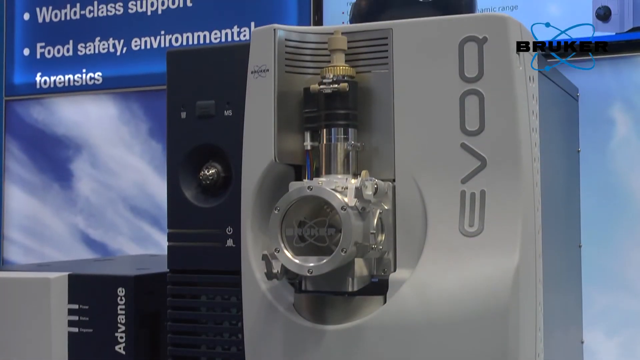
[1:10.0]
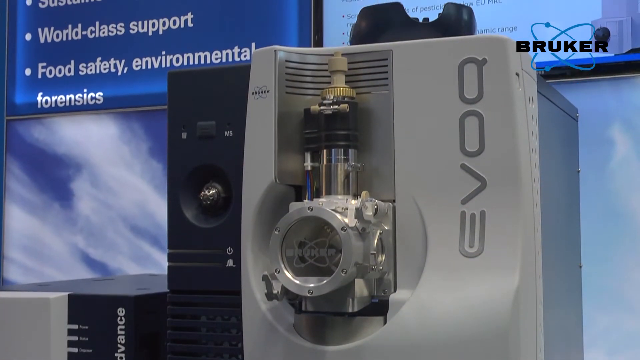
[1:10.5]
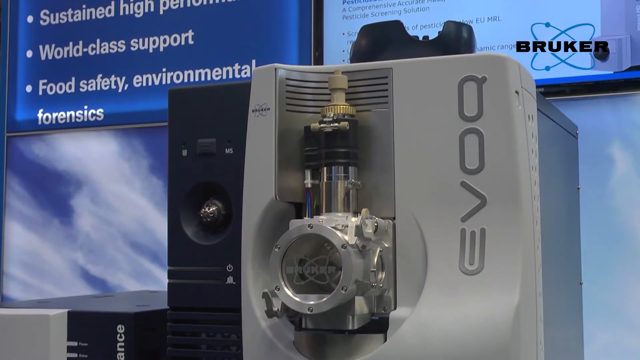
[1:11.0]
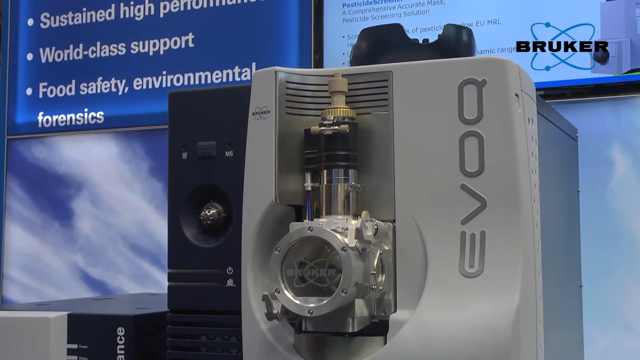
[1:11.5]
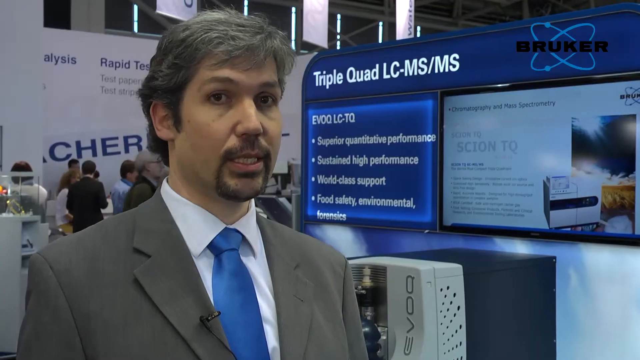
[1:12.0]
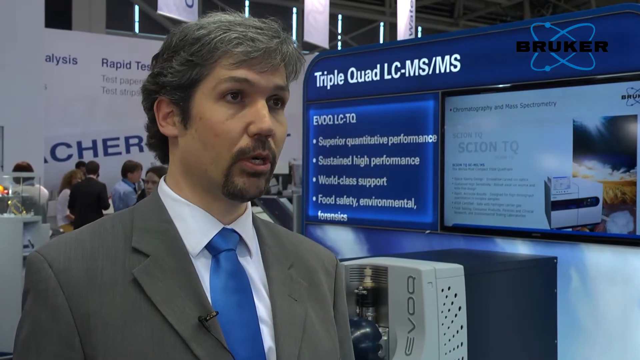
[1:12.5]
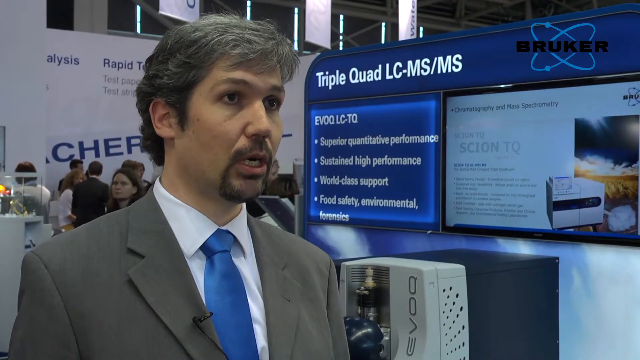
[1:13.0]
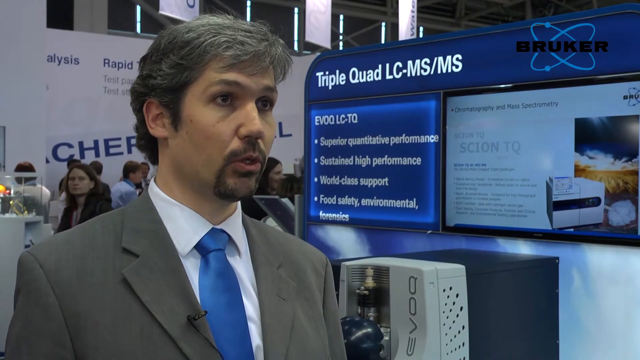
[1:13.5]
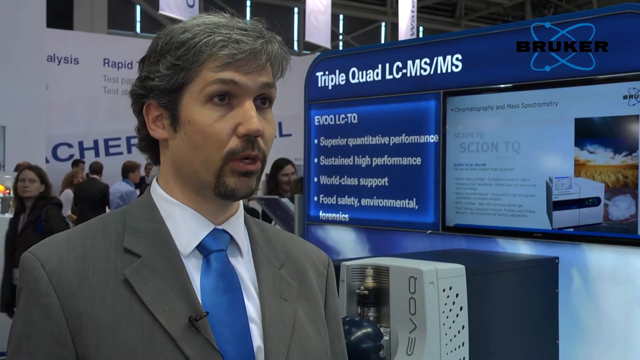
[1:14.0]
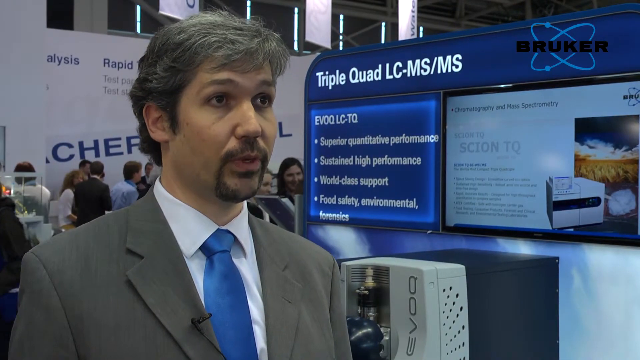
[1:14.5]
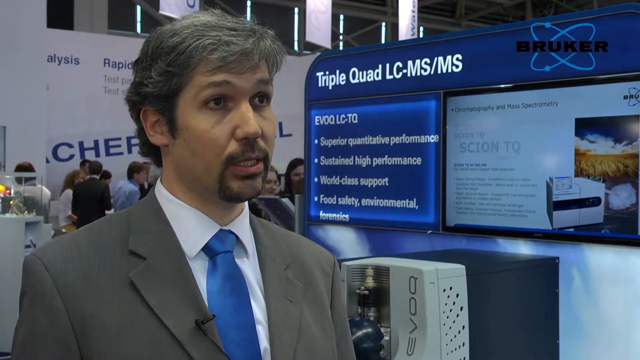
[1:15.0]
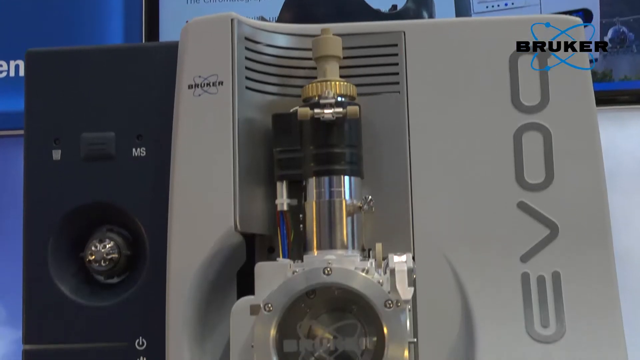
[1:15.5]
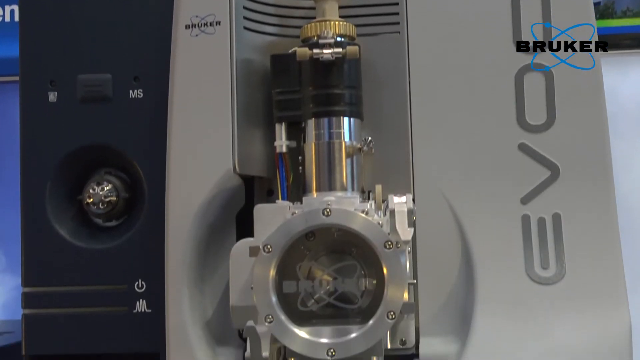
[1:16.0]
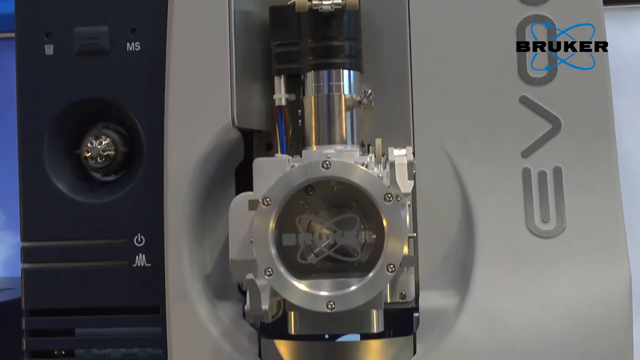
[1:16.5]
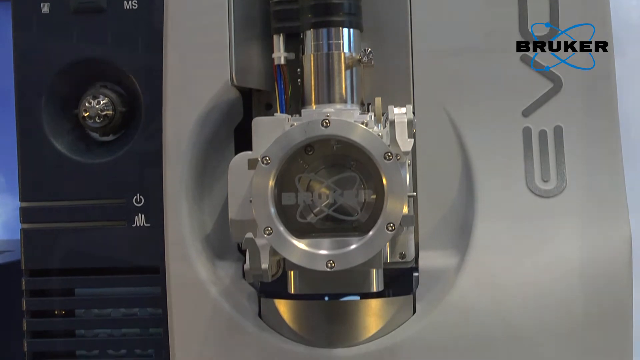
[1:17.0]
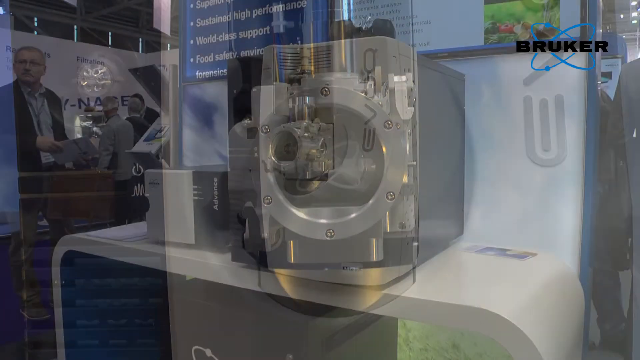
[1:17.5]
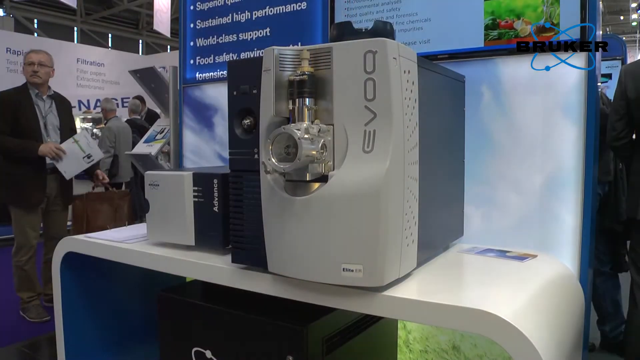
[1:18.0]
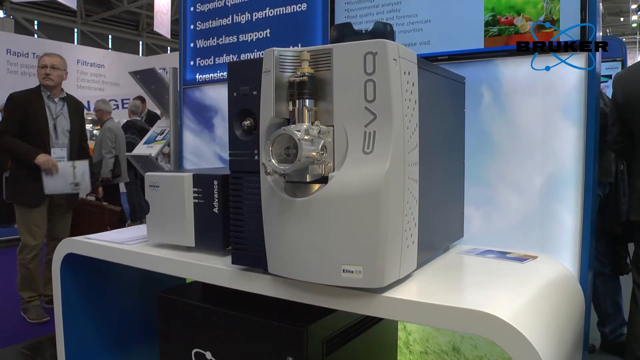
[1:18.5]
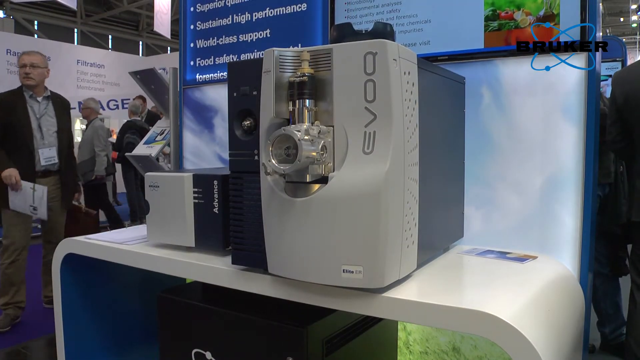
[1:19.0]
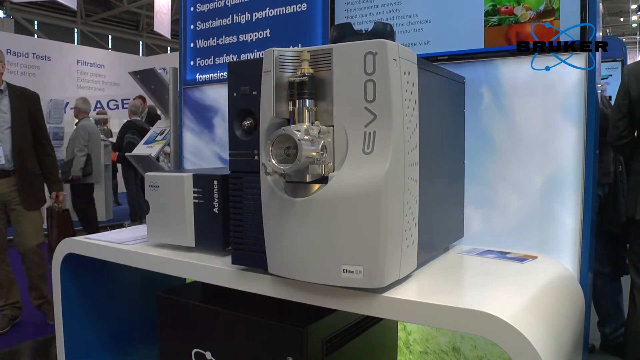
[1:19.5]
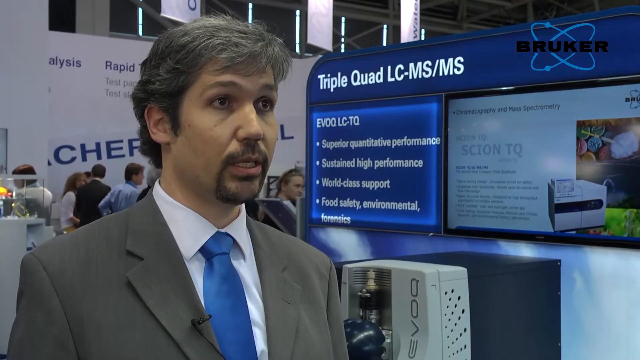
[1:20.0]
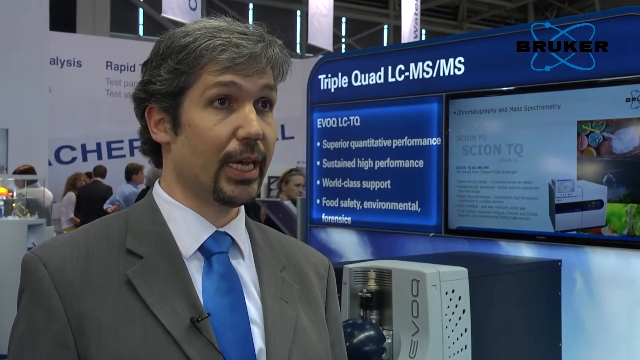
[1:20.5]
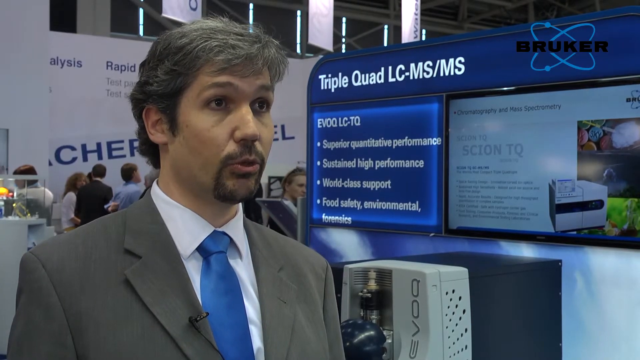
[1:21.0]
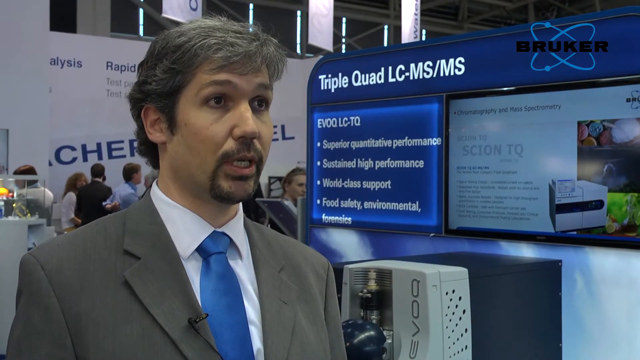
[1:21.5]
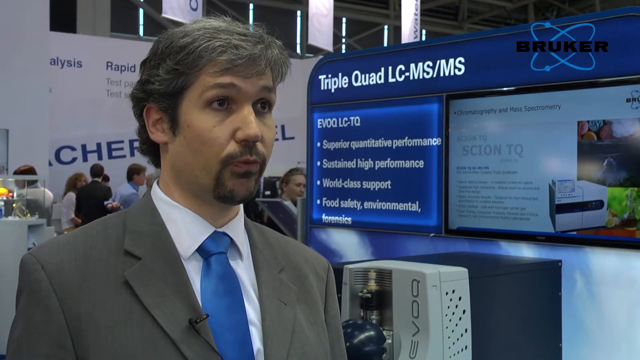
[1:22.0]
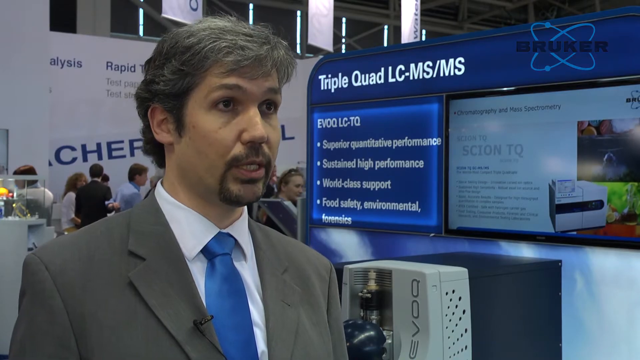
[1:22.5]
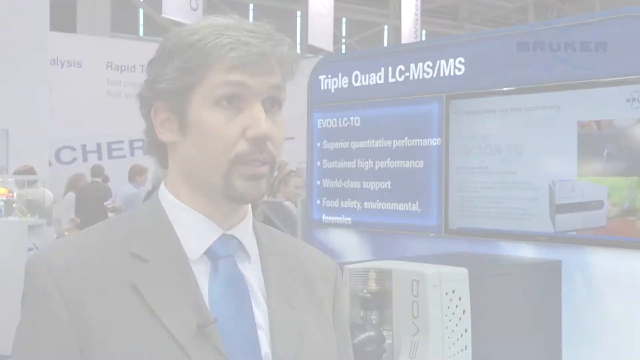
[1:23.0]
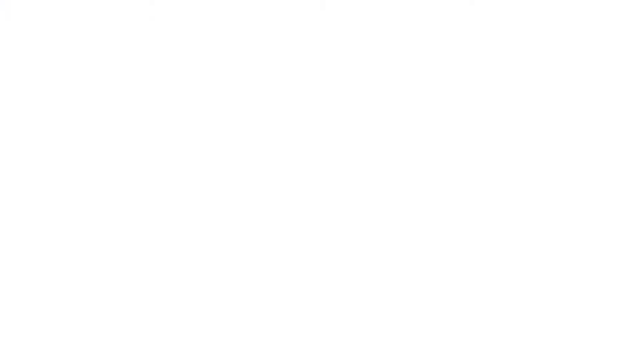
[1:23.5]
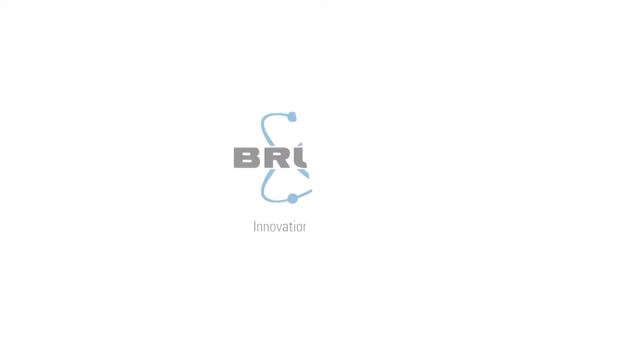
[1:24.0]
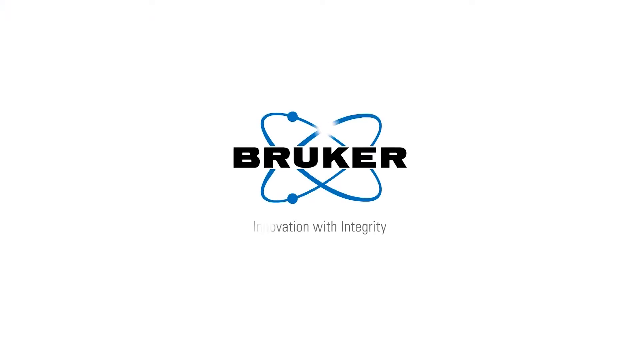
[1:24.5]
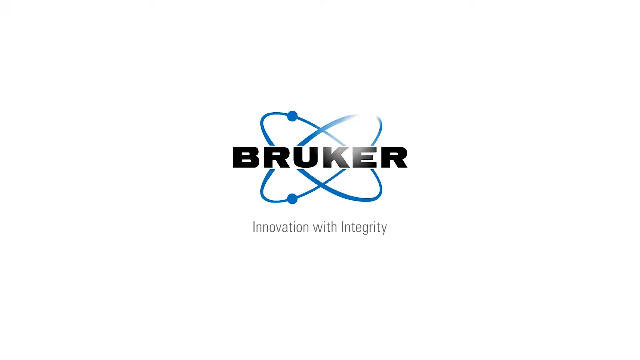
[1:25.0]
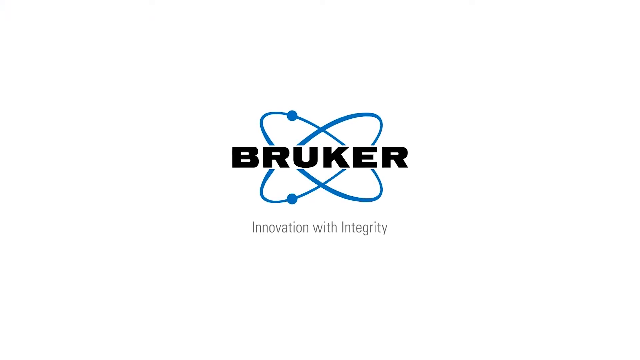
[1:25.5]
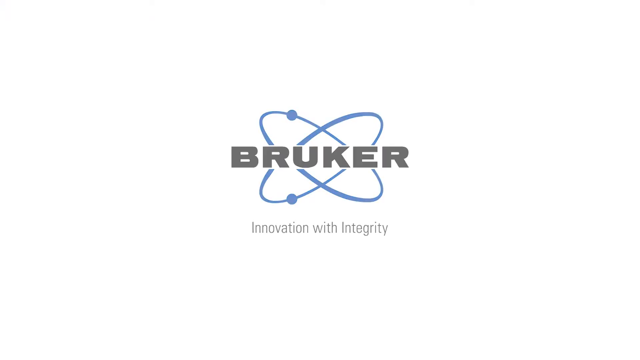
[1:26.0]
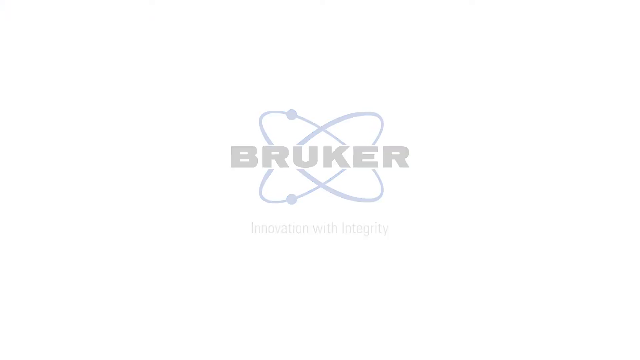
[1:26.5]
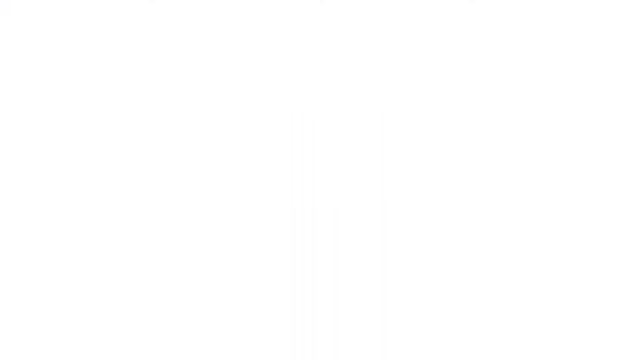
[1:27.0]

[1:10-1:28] The camera pans over the machine, then goes back to the man speaking into the camera. He wears a gray suit, a white shirt and a blue tie, in a convention center with people talking and moving around in the background. The camera starts from the top of the machine and pans down toward the bottom, where the valve and the logo are visible. It switches back to a view of the machine from a distance, then returns to the man talking. Finally a picture of the logo appears: "Bruker" in black in the center on a white background, with the caption "innovation with integrity" underneath and two atoms in a circle. After the logo disappears, the screen goes completely white.